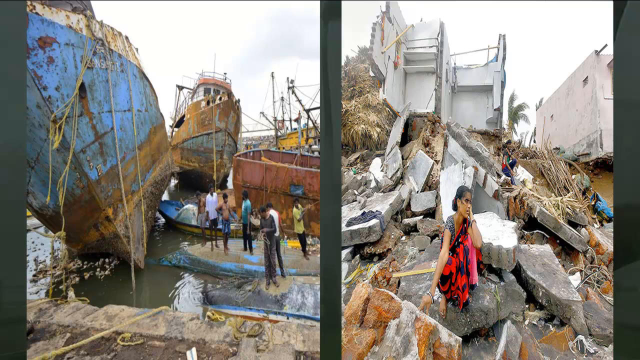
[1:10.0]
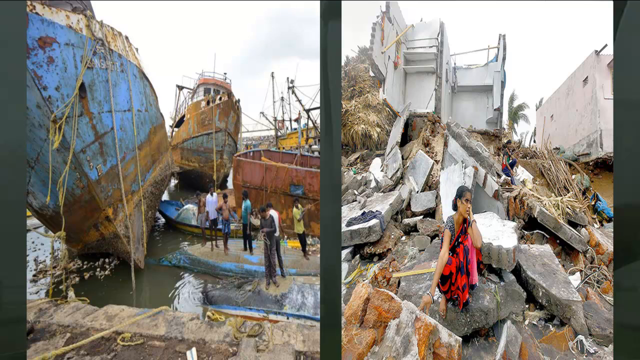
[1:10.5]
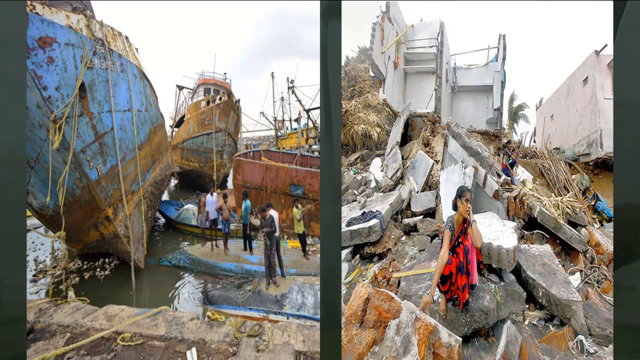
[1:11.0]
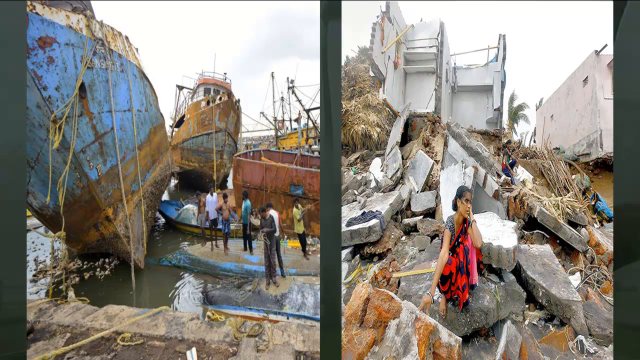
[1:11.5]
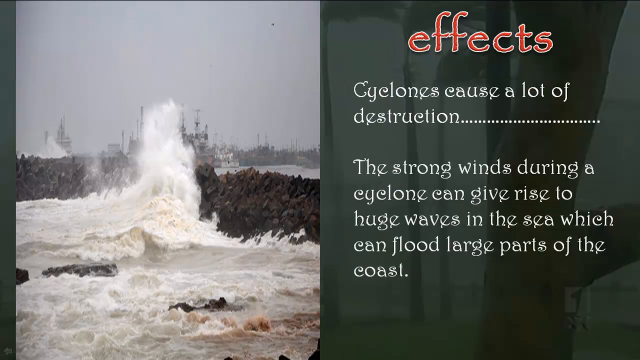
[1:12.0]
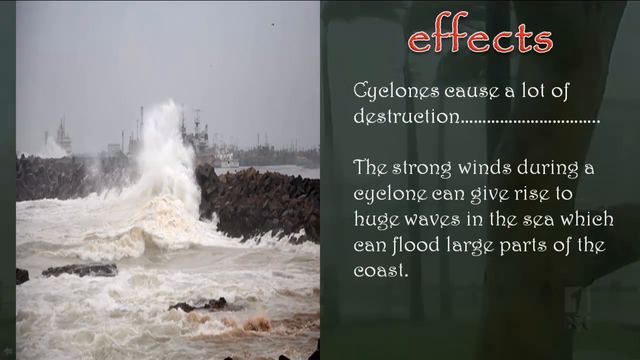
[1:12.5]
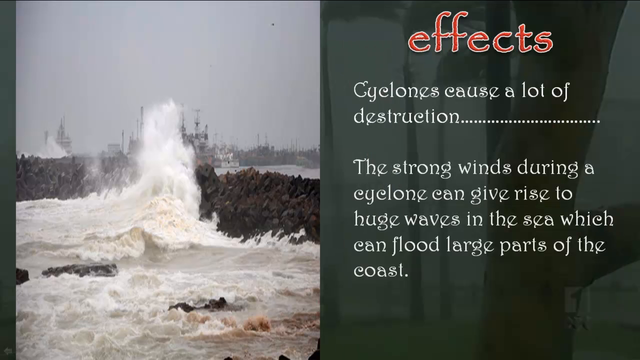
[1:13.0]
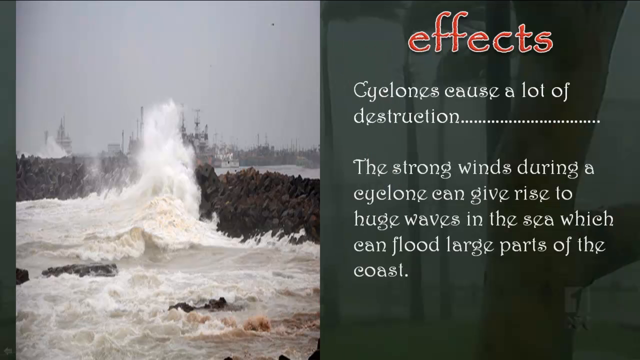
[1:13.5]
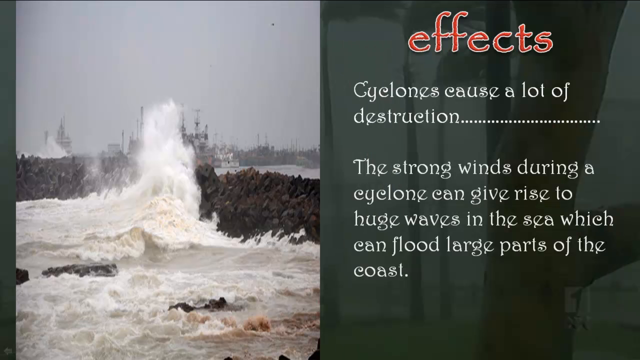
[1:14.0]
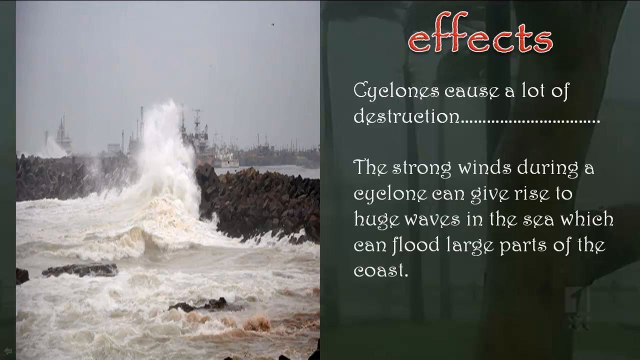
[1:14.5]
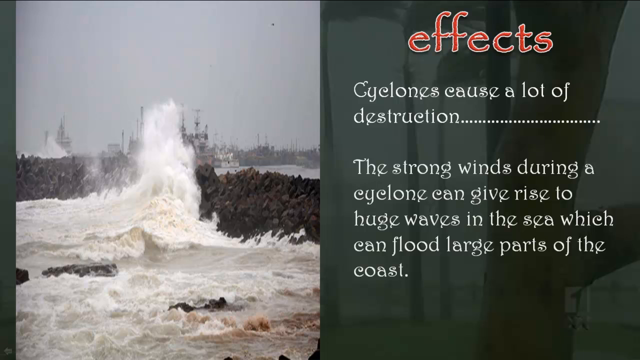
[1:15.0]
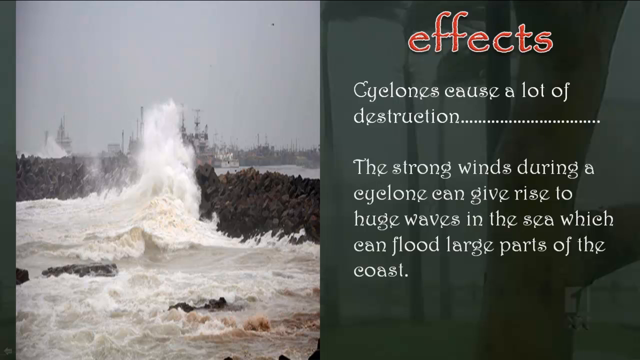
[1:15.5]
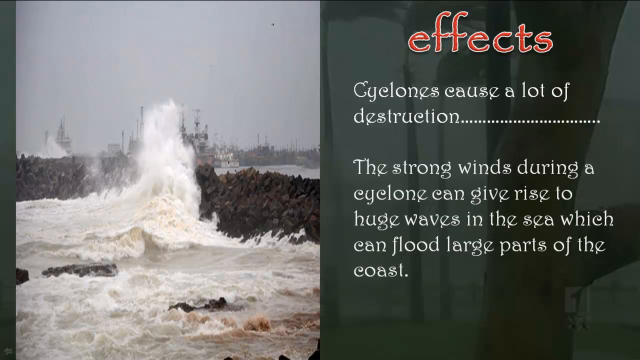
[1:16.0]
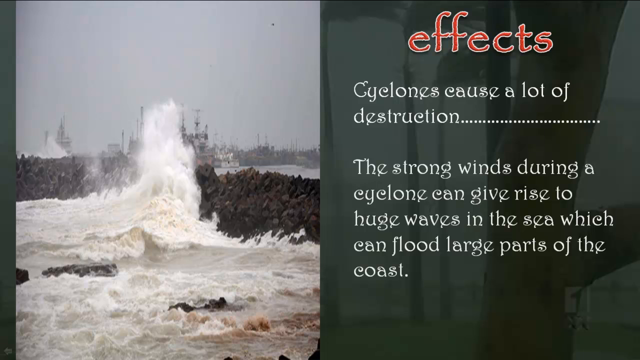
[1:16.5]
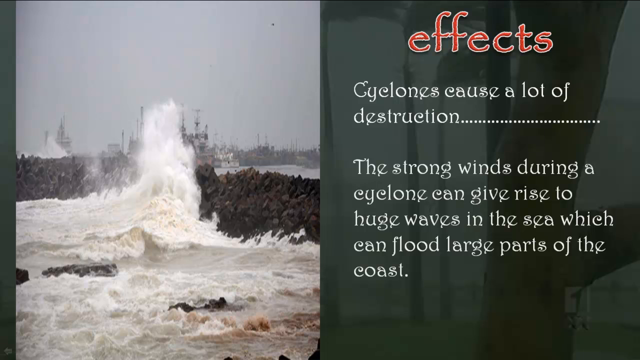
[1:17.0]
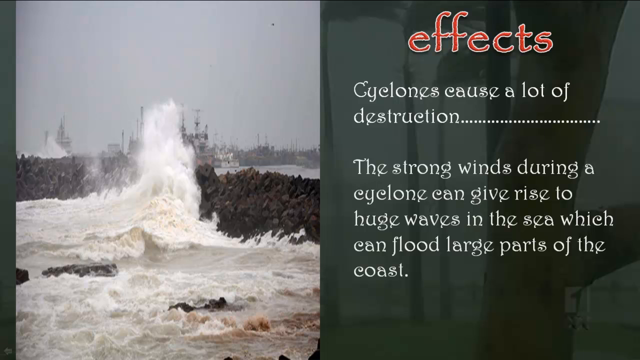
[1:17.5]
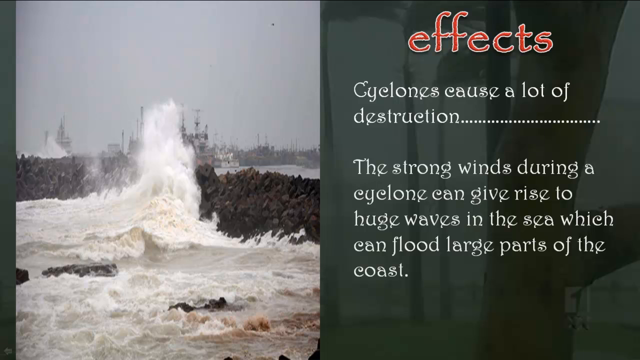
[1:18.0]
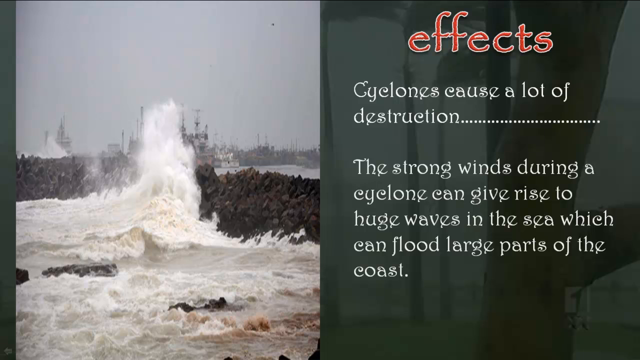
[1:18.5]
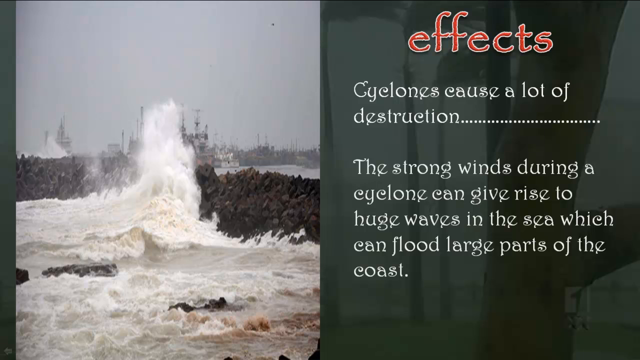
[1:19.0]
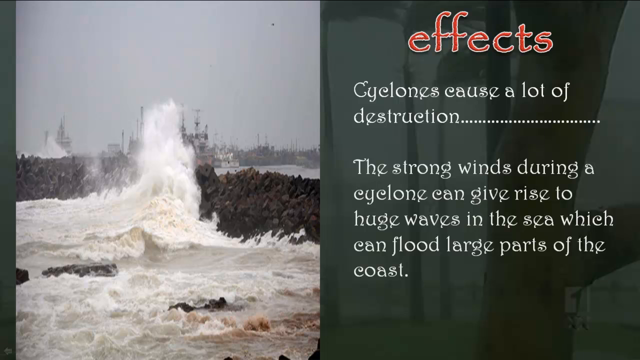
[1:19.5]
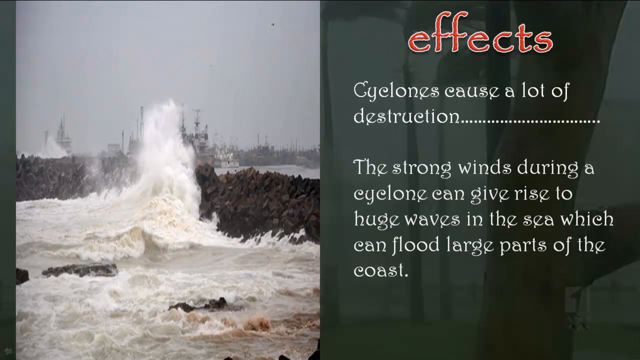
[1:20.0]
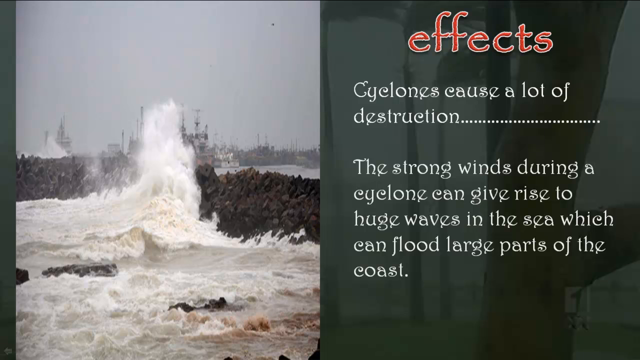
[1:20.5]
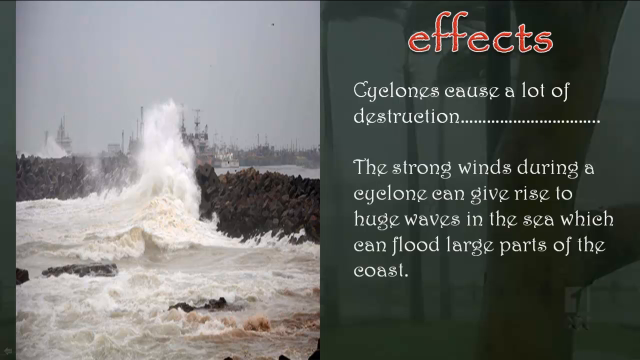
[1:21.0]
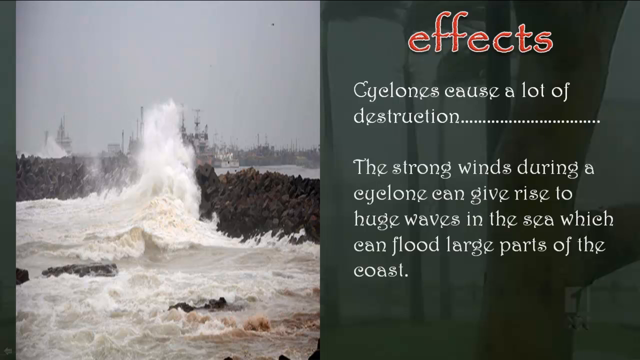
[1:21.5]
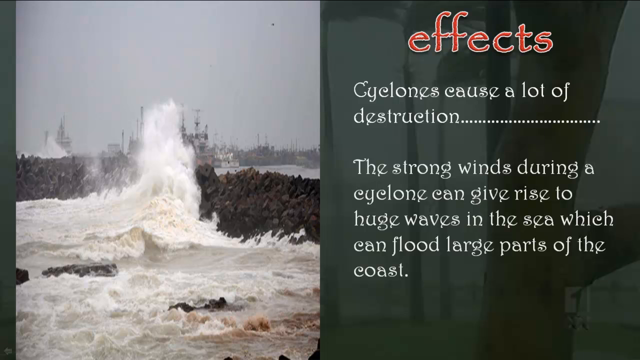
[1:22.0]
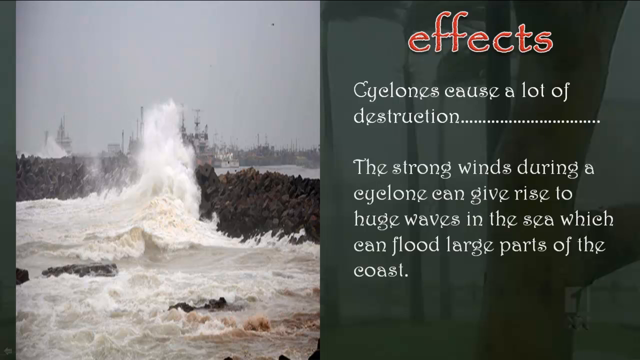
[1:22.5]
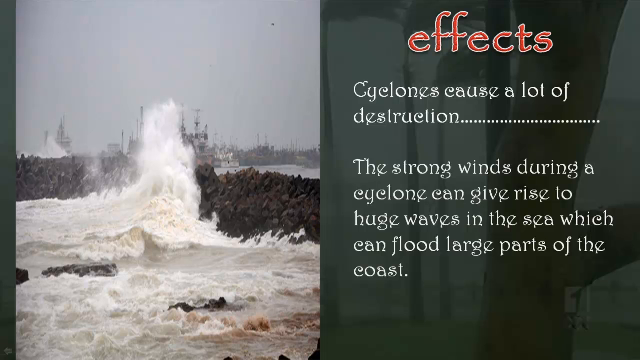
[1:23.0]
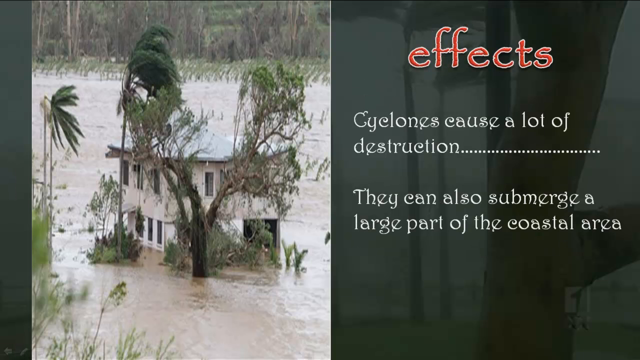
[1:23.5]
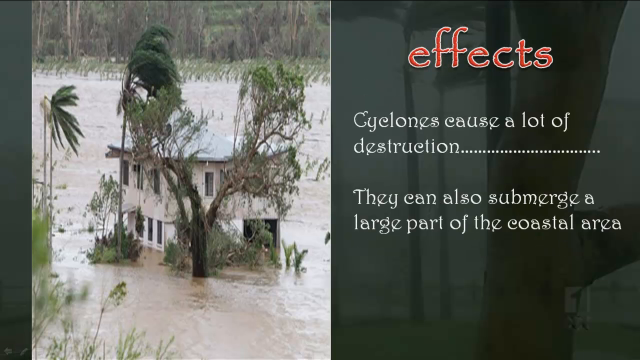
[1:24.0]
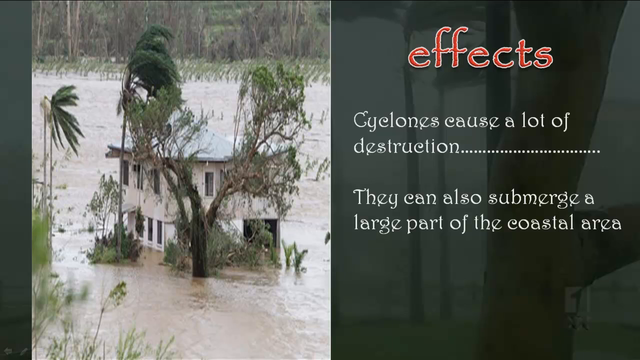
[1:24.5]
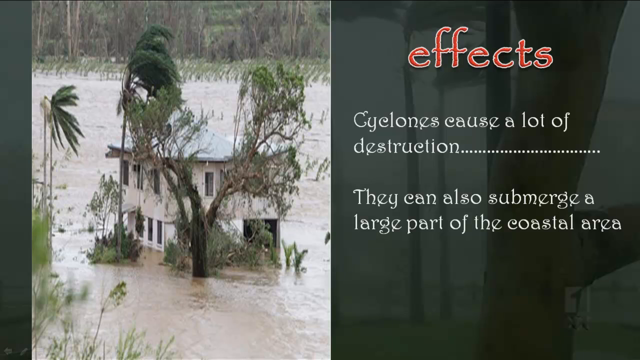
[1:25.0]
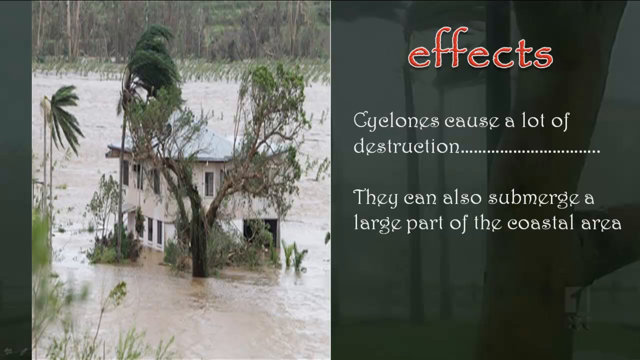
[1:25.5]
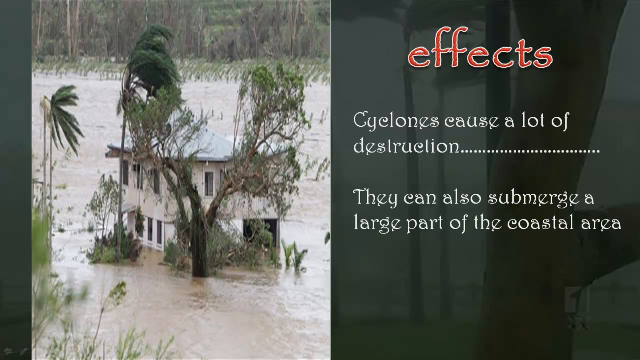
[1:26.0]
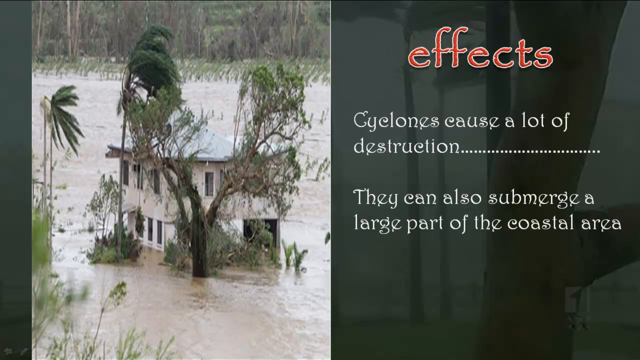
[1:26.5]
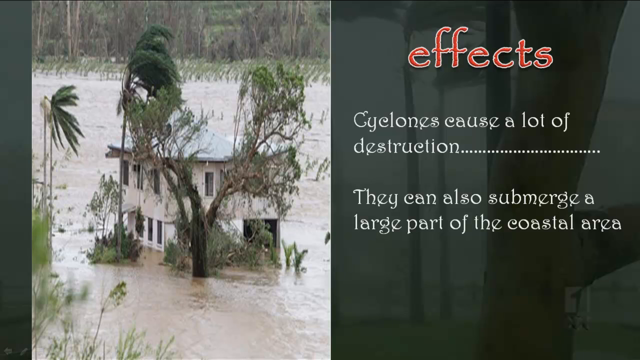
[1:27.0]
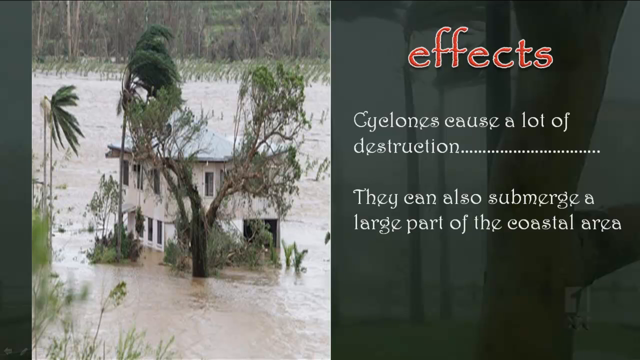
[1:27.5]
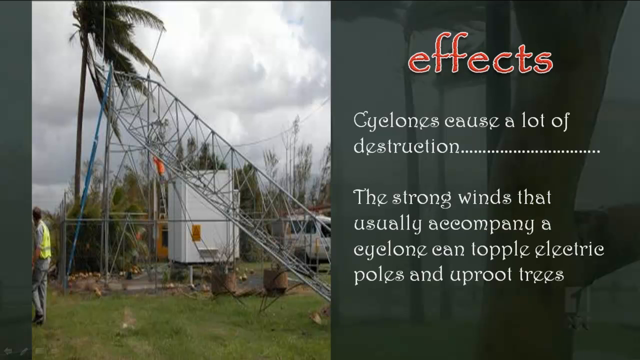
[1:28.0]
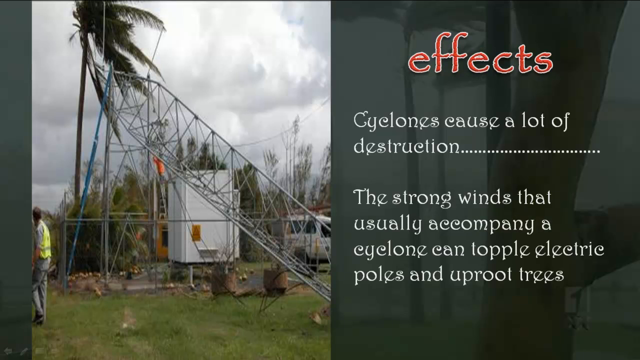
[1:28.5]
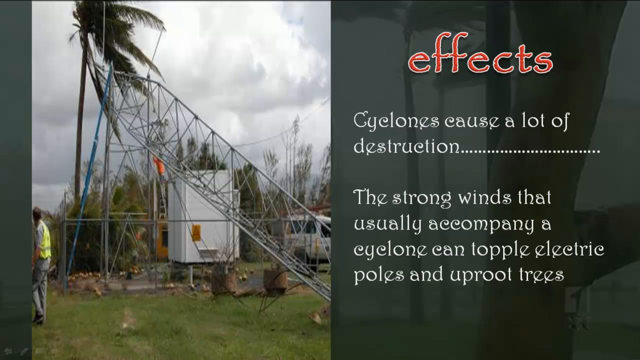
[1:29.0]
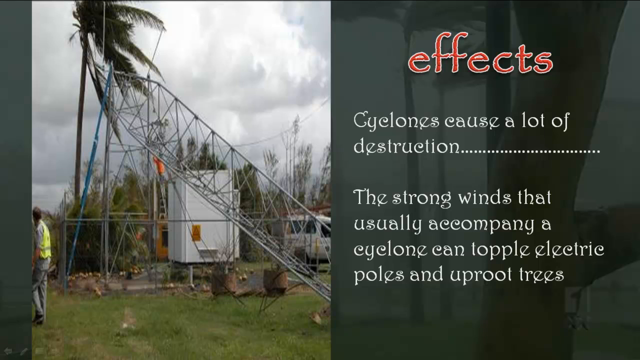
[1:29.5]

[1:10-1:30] On the left is a picture of ships thrown out of the water by the cyclone, with people on the boats standing up and looking at it. On the right, a mother and other people are standing on the ruins of their home, with rocks thrown about. The next slide is about effects, with text reading "Cyclones cause a lot of destruction" and describing how strong winds can raise huge waves in the sea that can affect large parts of the coast; the picture on the left shows water striking the coast. The next effect says cyclones can also submerge large parts of coastal areas, with an image of a house partly submerged in water and tall trees close to it. Another effect says "the strong winds that usually accompany a cyclone can topple electric poles and uproot trees," and the left side shows toppled electric poles and uprooted trees.